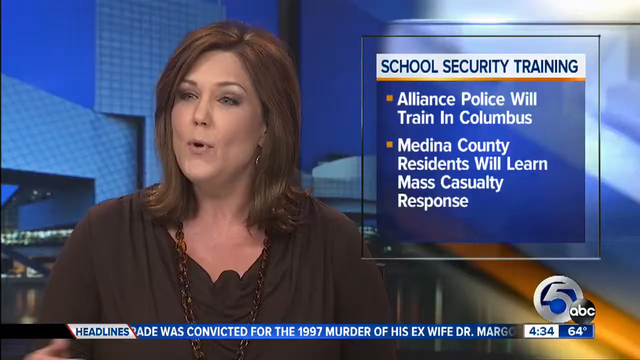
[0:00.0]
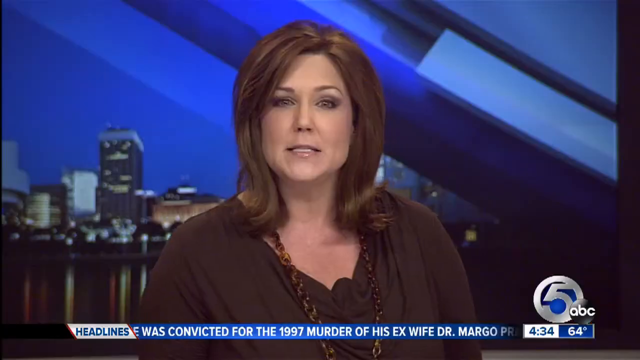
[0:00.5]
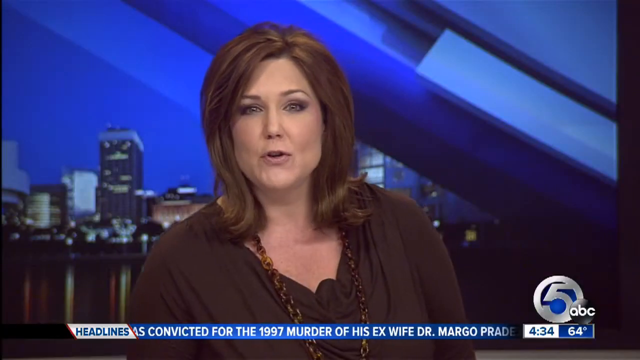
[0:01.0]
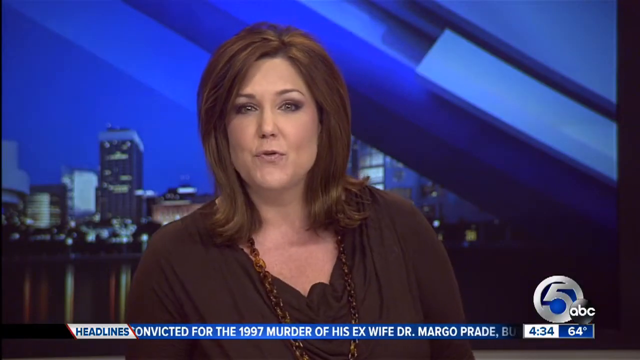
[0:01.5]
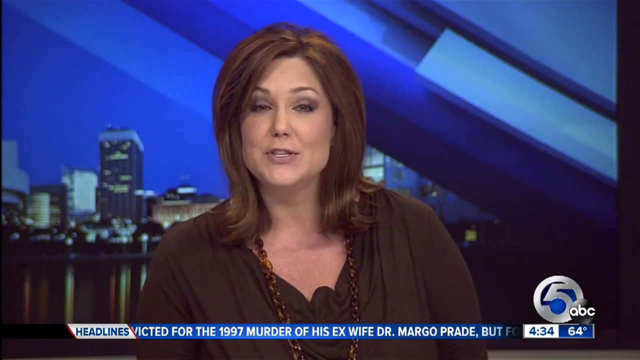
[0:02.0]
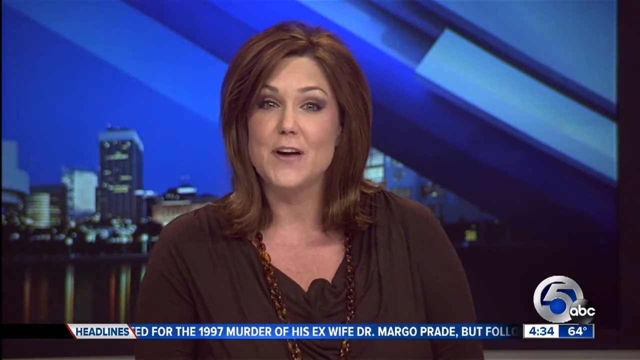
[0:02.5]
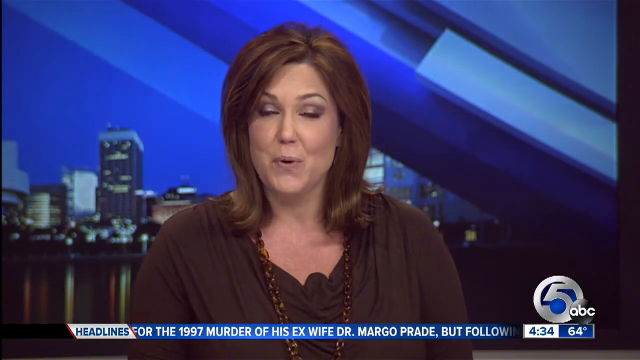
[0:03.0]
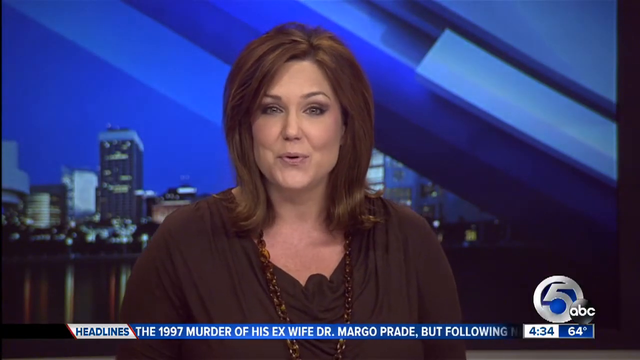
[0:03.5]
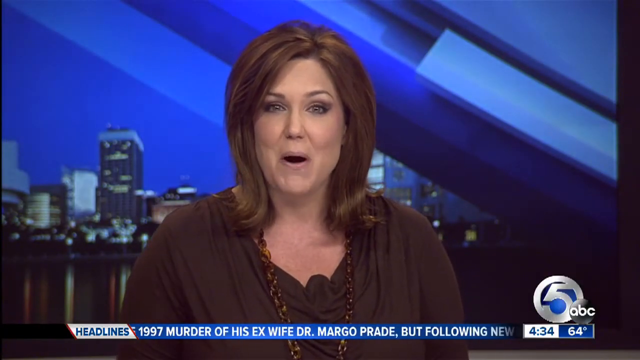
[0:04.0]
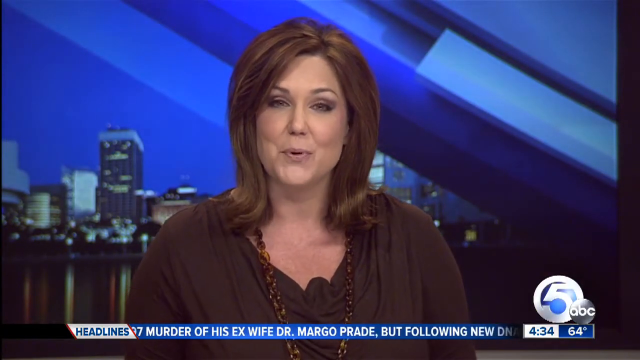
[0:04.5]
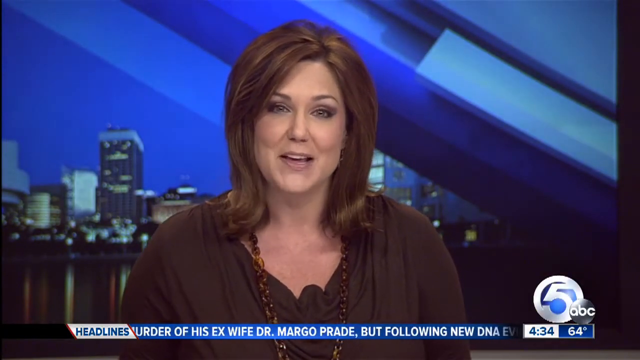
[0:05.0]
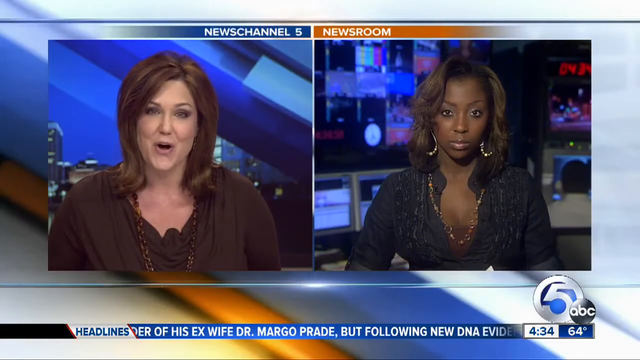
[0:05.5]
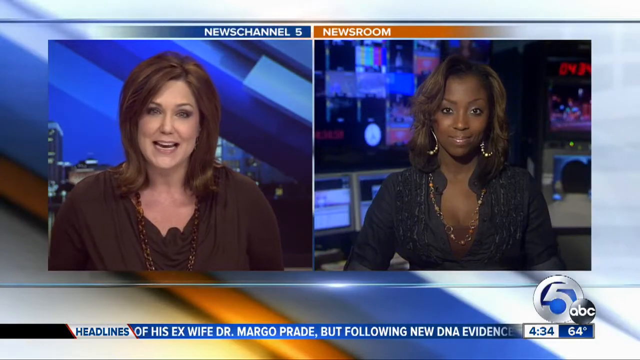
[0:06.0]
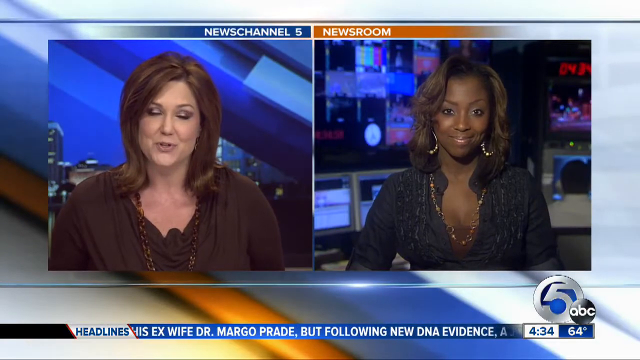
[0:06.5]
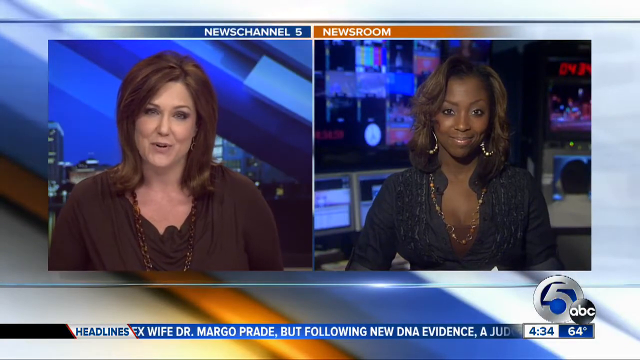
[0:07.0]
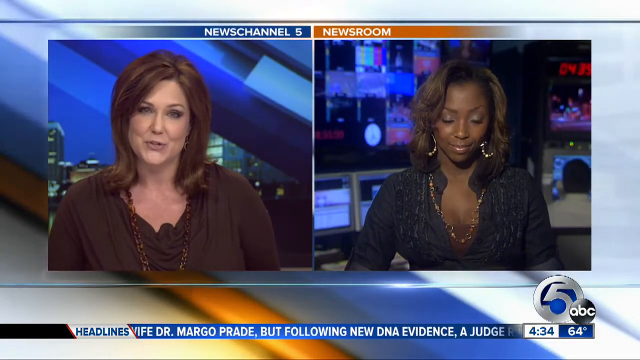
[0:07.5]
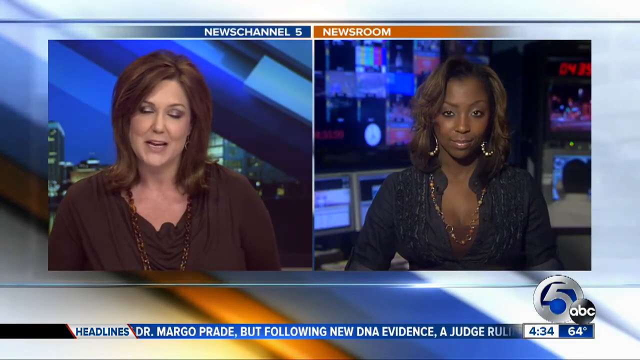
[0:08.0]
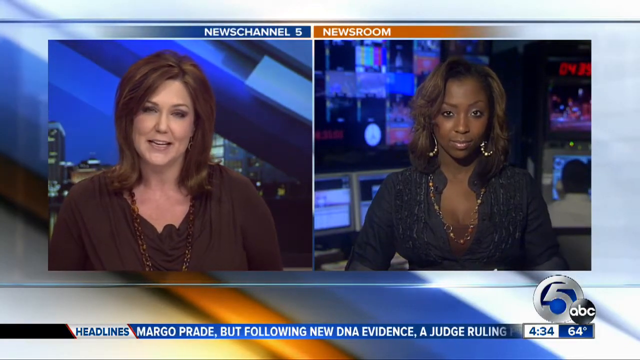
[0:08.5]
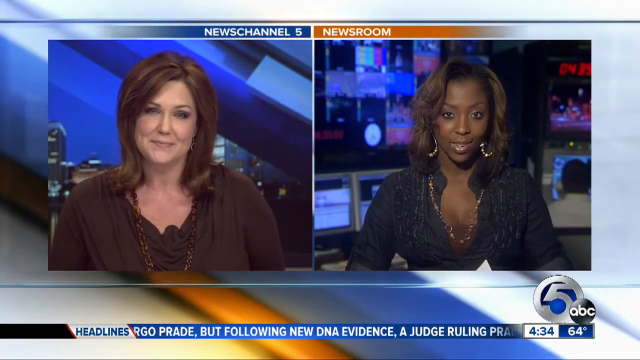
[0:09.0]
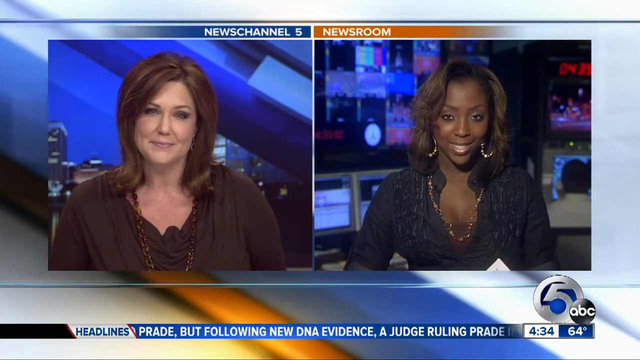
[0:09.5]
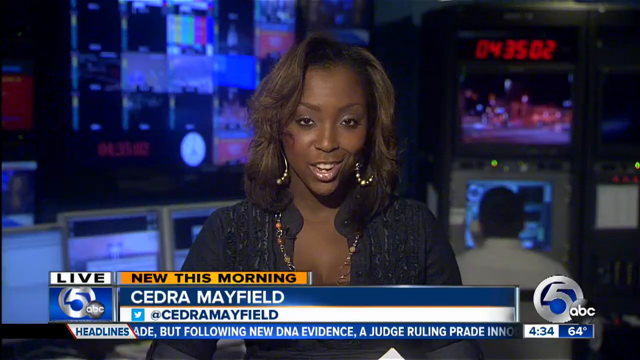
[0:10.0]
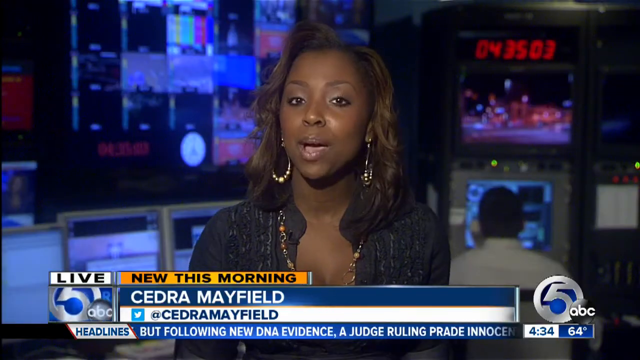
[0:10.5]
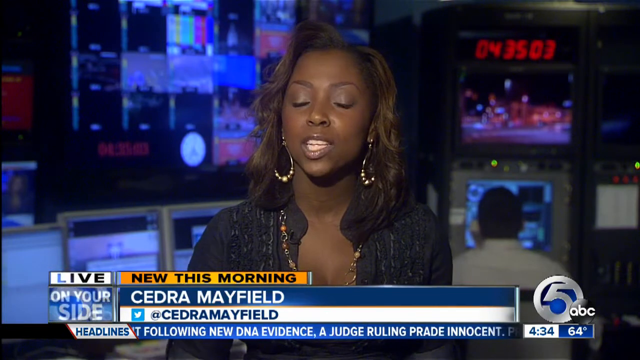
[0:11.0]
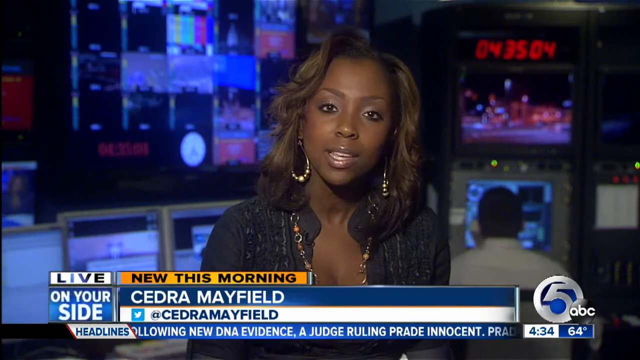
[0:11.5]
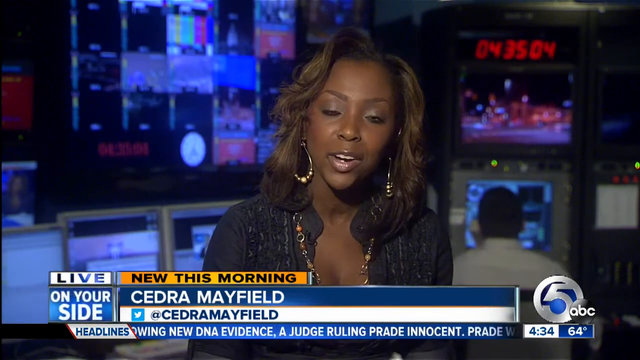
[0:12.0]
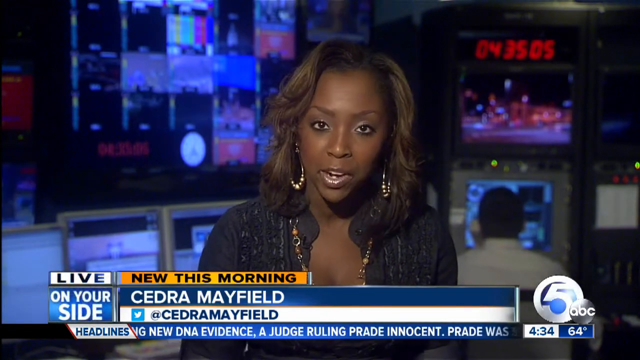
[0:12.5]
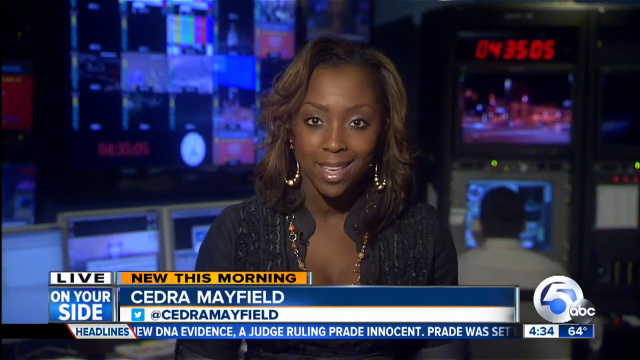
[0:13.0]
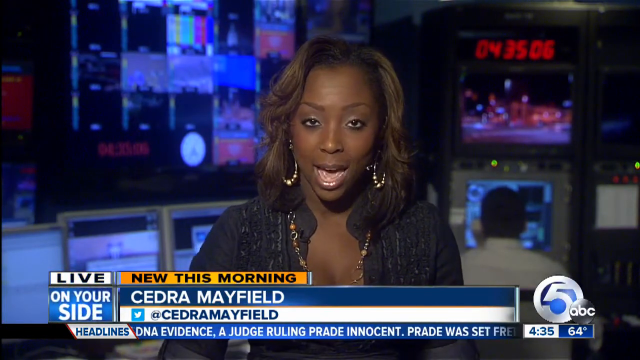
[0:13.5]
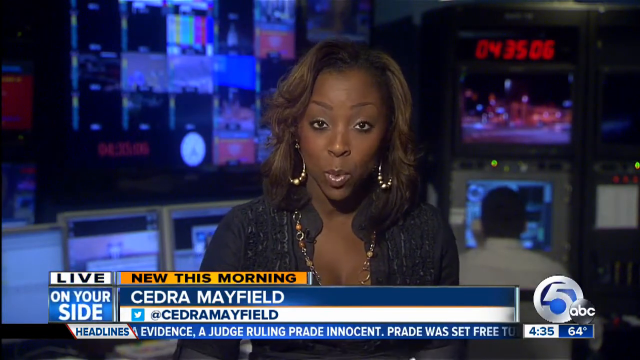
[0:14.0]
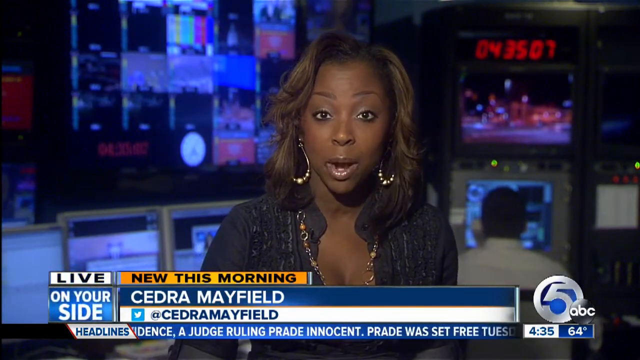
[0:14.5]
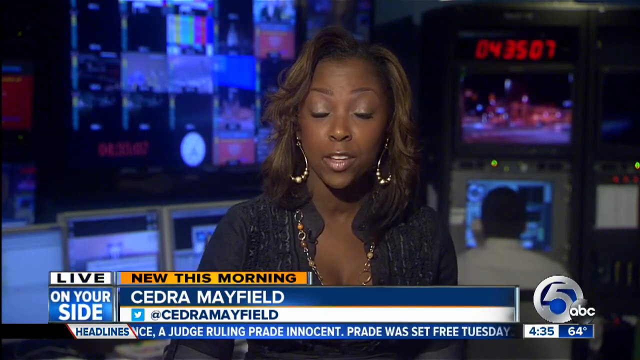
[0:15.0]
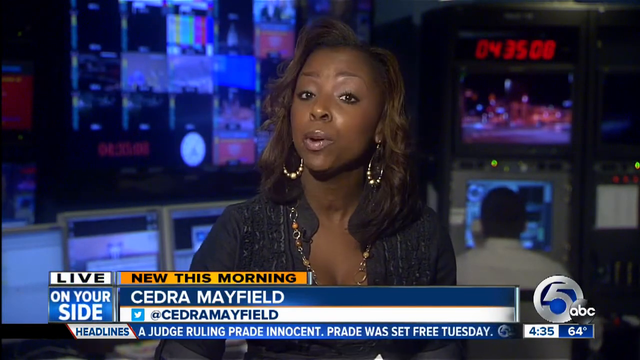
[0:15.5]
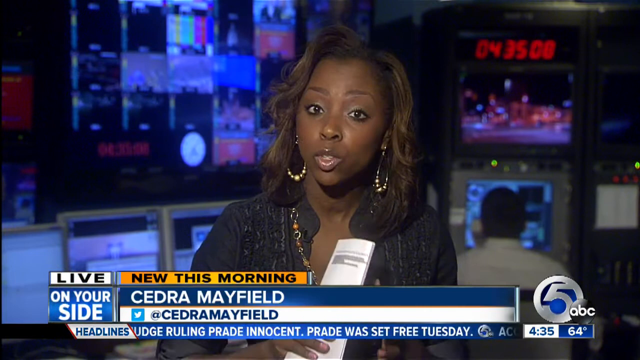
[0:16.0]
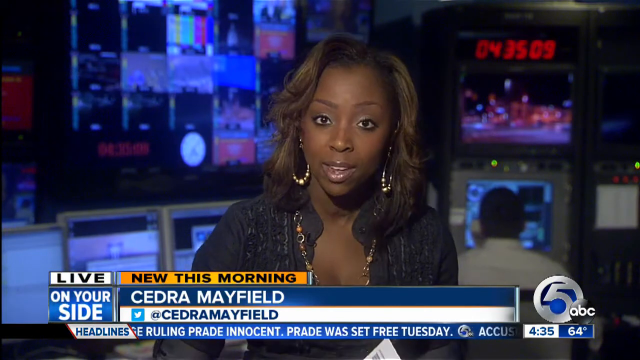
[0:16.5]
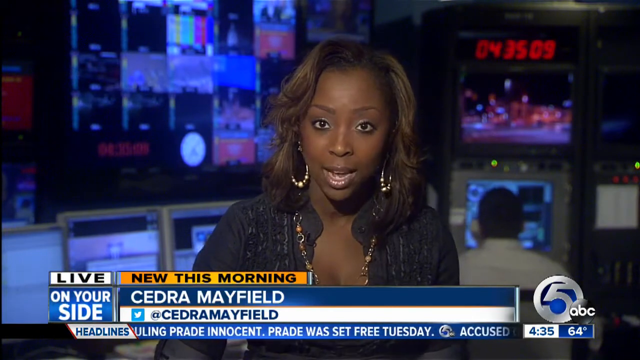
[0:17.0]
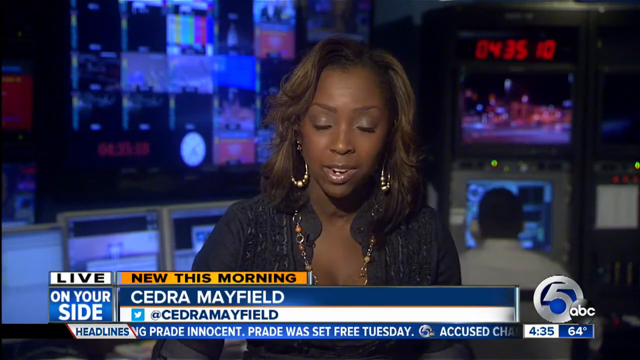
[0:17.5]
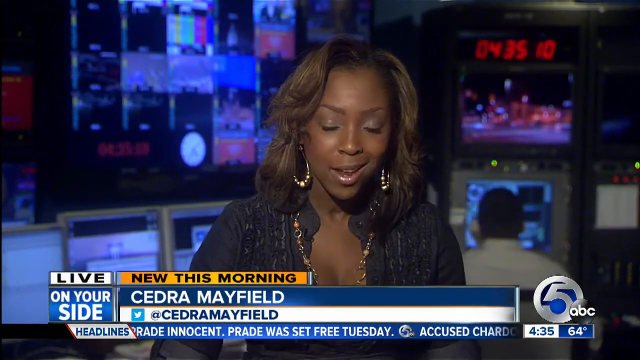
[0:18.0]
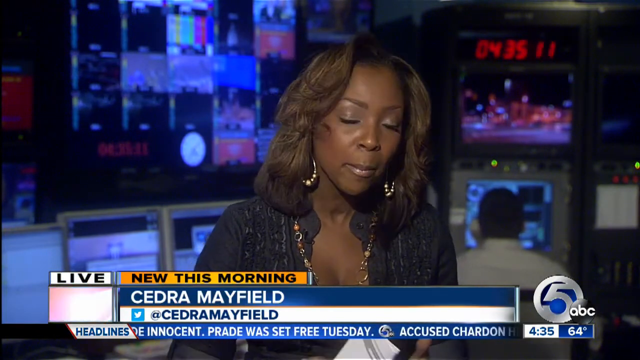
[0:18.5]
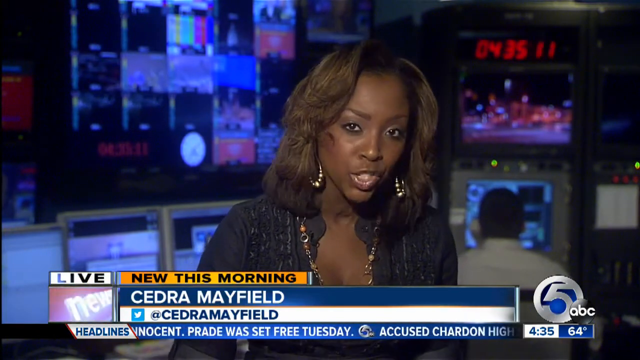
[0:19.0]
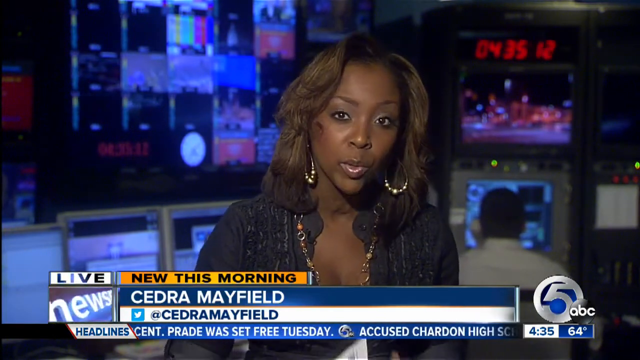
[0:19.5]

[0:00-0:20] This looks like a local Channel 5 ABC news broadcast. Channel 5 is shown at the bottom along with the ABC logo, above the temperature and the time at the very bottom right. Various headlines scroll across from right to left: the word "headlines" is in blue on a white trapezoidal background, and the scrolling text is white on a bluish background. It begins with a single shot of the anchor, a woman in a professional-looking brown shirt with a necklace of the same color. She appears to be speaking with someone in a different part of the newsroom, and the shot changes to a dual shot of the anchor and the woman in the newsroom, who appears to be an African-American woman wearing earrings, a necklace and a darker professional shirt. The view then goes to her full screen, and her name appears in the lower third: "Cedra Mayfield". Her Twitter handle is shown below the name, and above it "new this morning" appears in a gold-style callout.